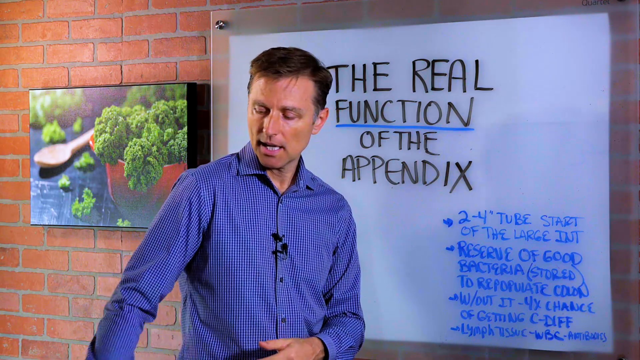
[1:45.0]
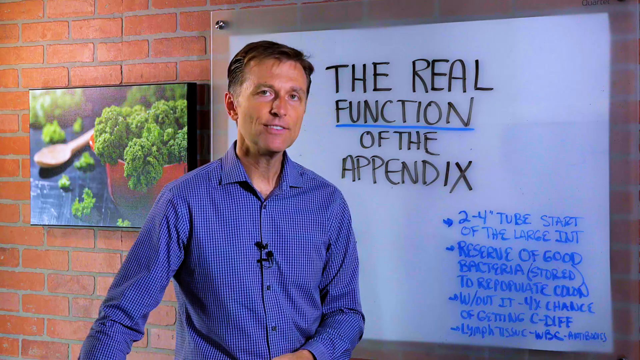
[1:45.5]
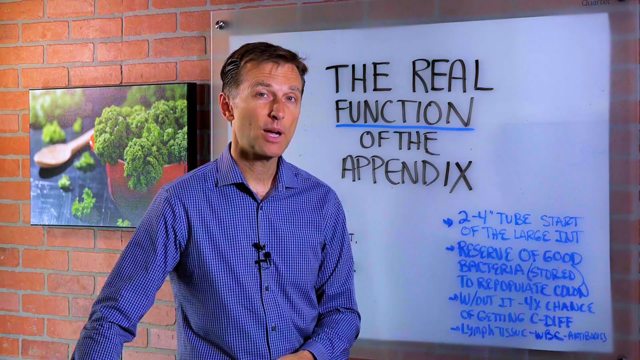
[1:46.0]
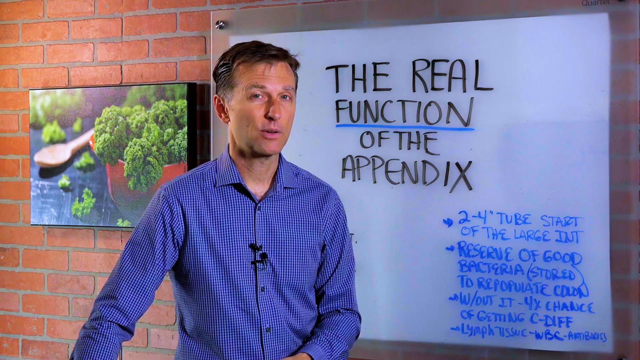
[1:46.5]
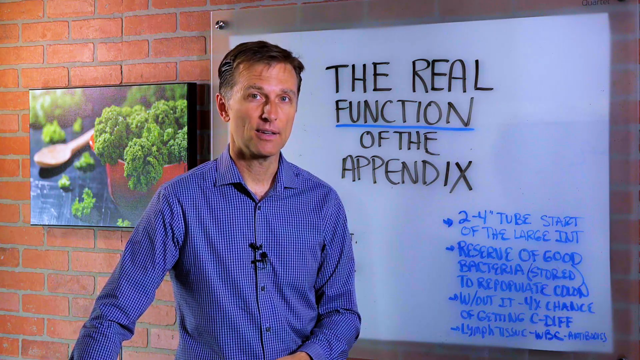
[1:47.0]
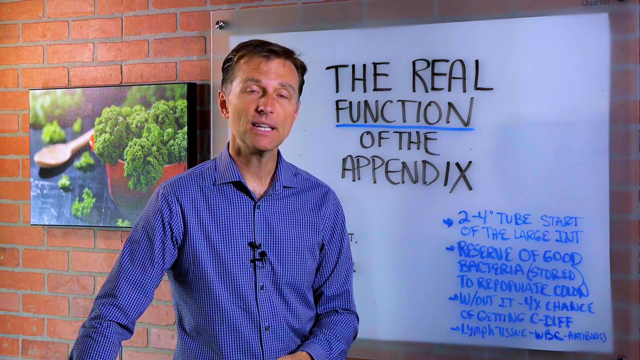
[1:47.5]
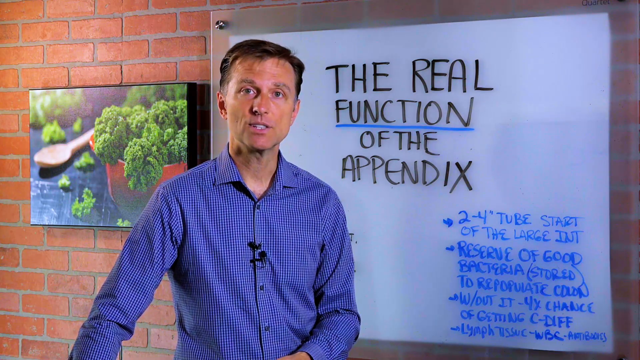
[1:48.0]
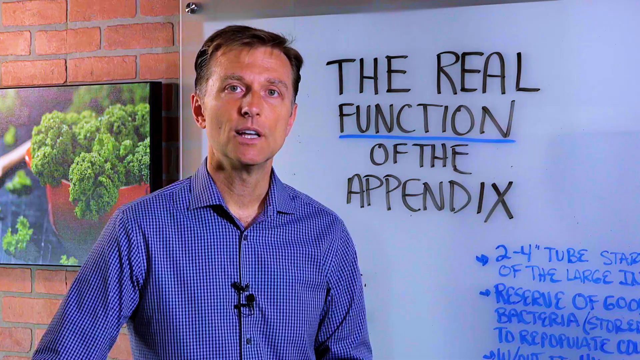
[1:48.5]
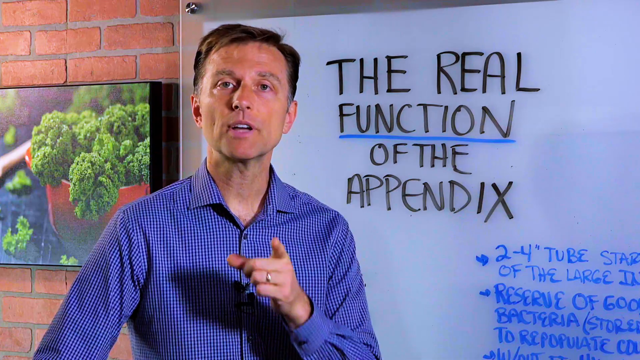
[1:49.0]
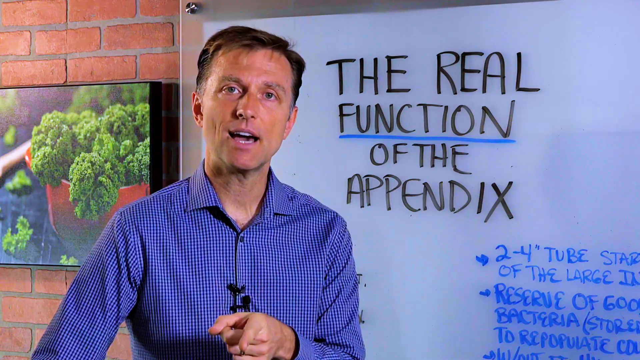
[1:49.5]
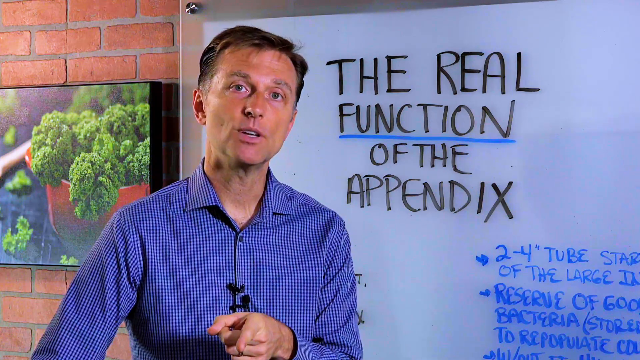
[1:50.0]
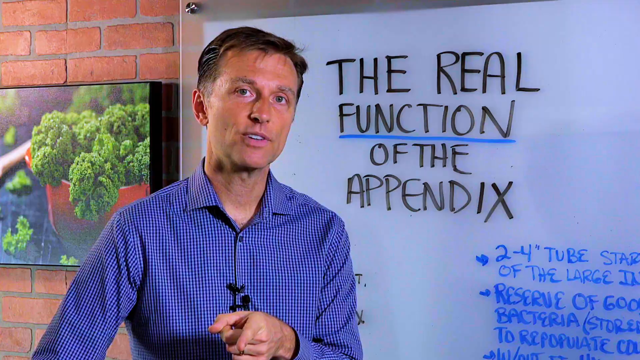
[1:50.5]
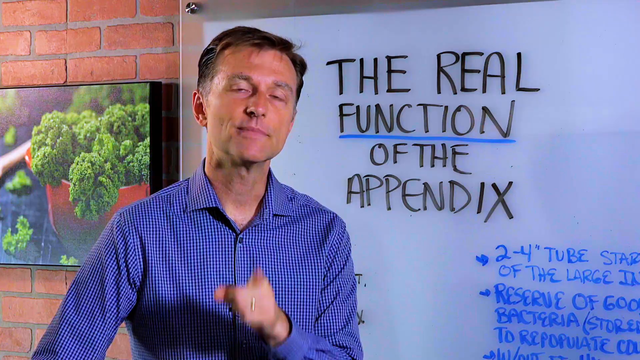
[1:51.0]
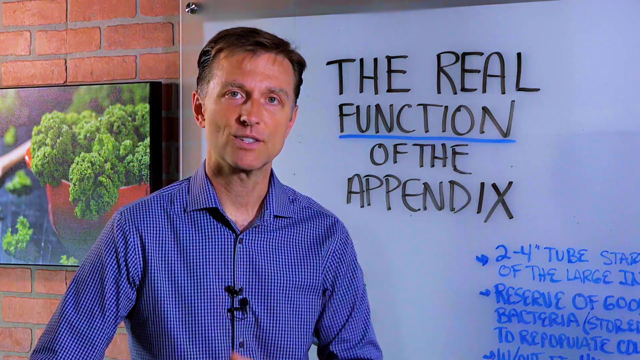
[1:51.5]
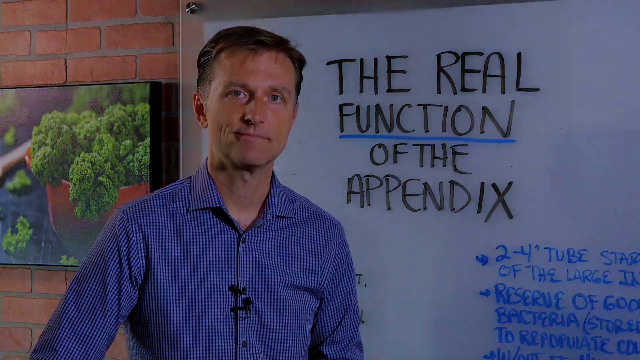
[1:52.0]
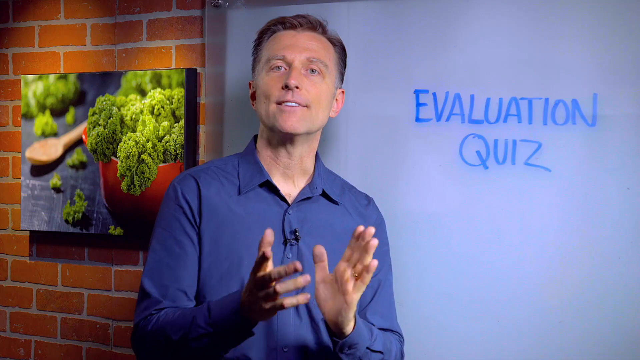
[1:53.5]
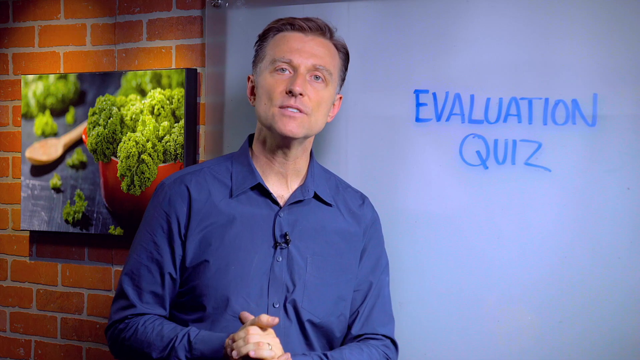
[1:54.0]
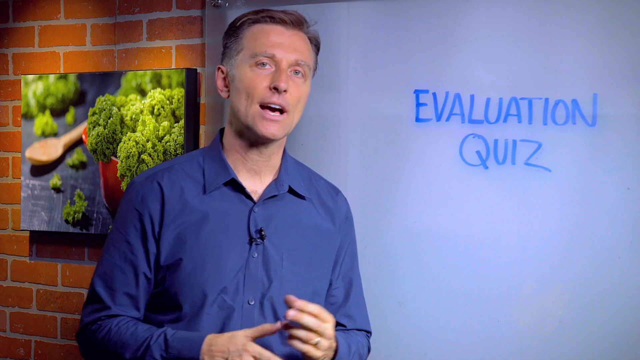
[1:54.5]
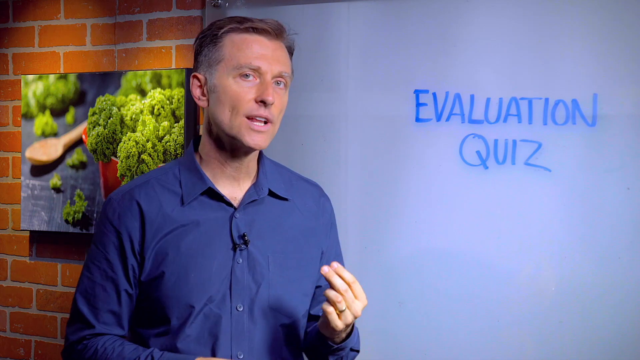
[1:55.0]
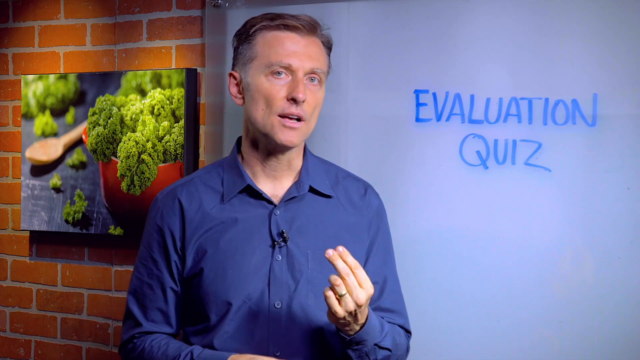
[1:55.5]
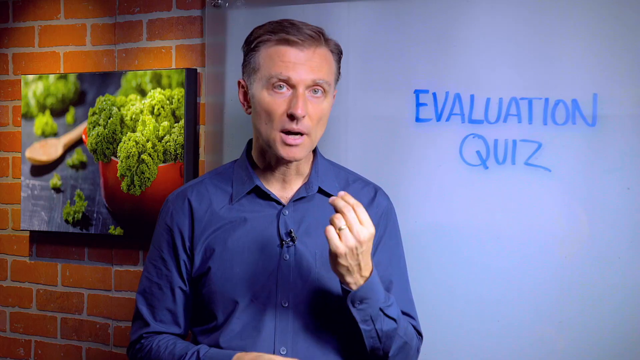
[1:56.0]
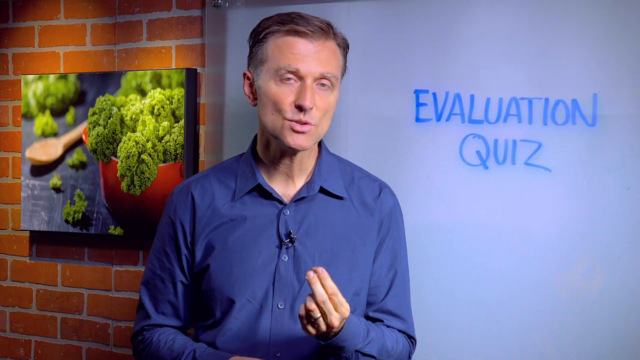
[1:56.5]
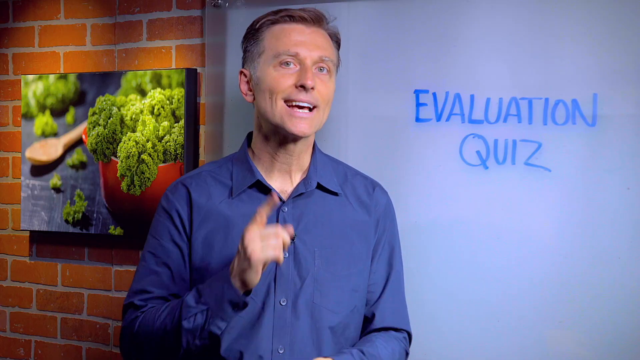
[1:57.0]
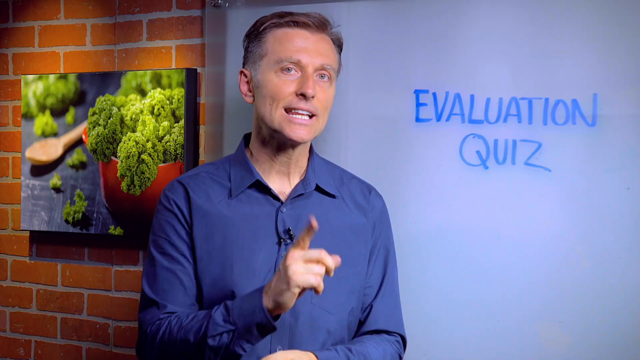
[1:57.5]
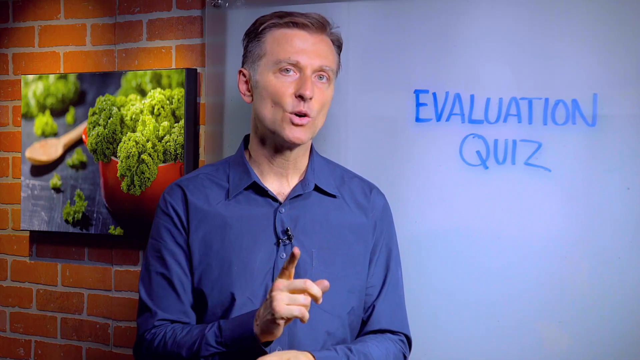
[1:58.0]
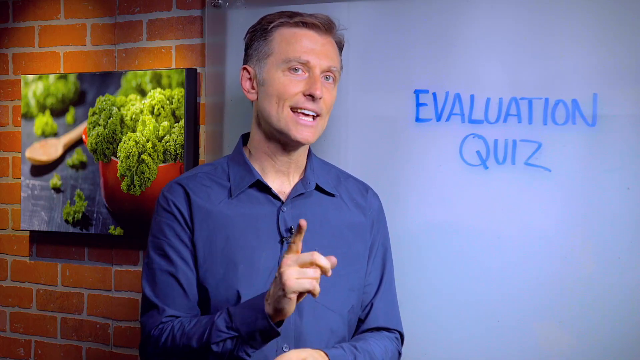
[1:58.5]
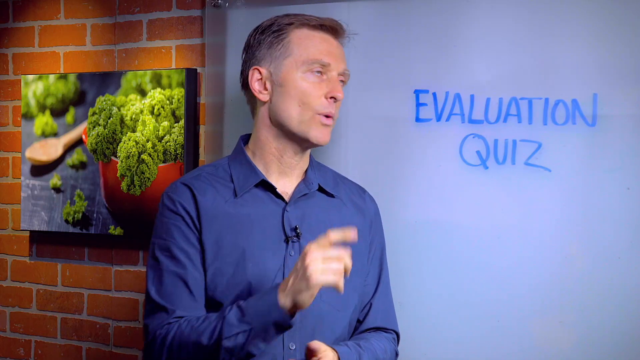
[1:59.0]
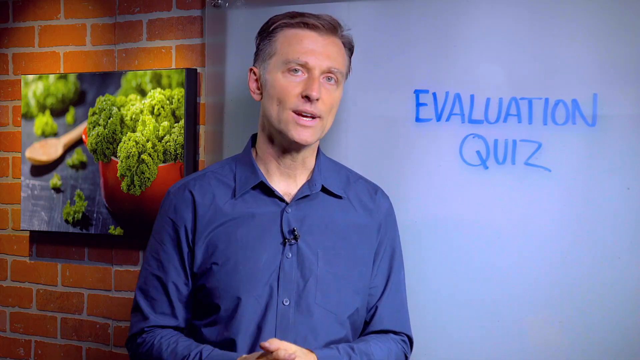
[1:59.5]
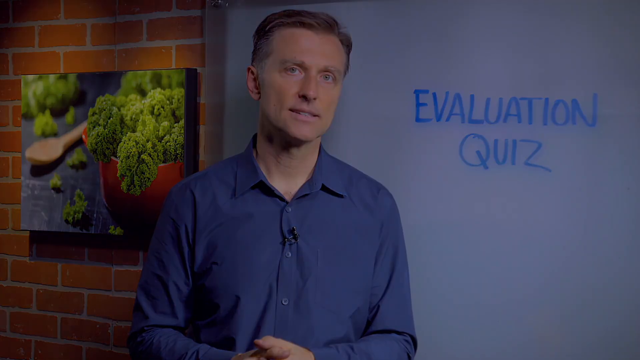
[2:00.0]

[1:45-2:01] The man gives a side eye while talking, and the camera zooms in from a waist-up view to about chest up. The text "evaluation quiz" appears. The video cuts back to him wearing a solid tealish long-sleeve shirt; zoomed in, he smiles, points at the viewer and says something positive, without waving goodbye. It cuts to him again with "evaluation quiz" on the same board behind him, without the appendix writing. In a tealish blue shirt, shown chest up, he holds his hands together, puts two fingers up in a gesture like the Italian one, and points at the viewer again. The kale salad bowl painting is still on the brick wall behind him; only the writing and his shirt differ, apparently from a different day. There is more light on him, and he seems to look a little older.